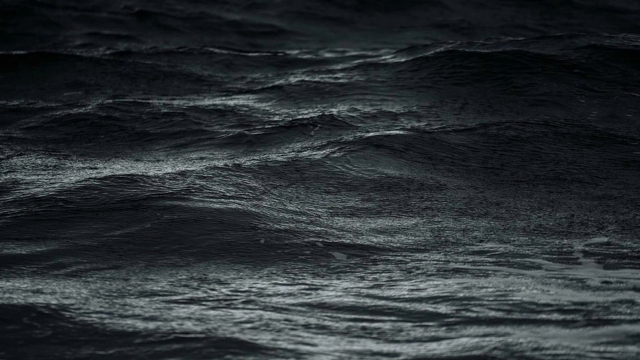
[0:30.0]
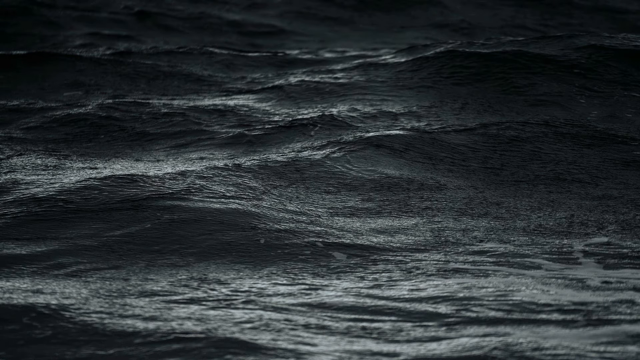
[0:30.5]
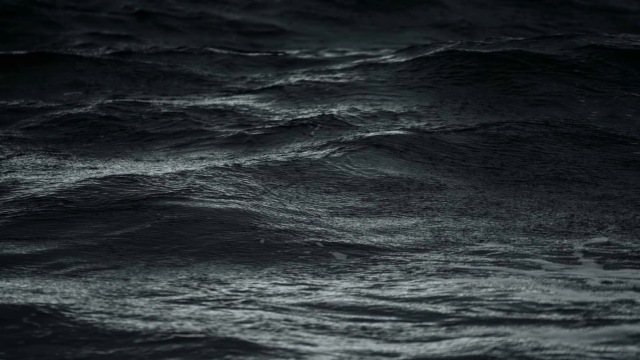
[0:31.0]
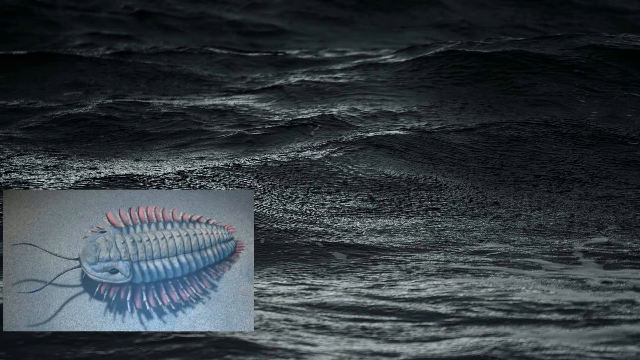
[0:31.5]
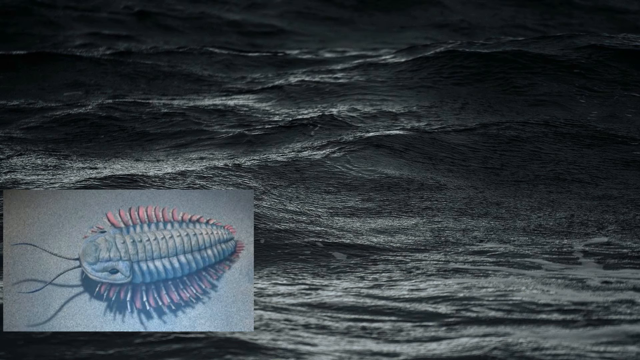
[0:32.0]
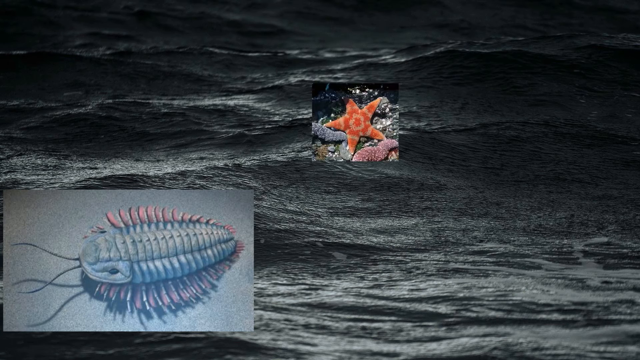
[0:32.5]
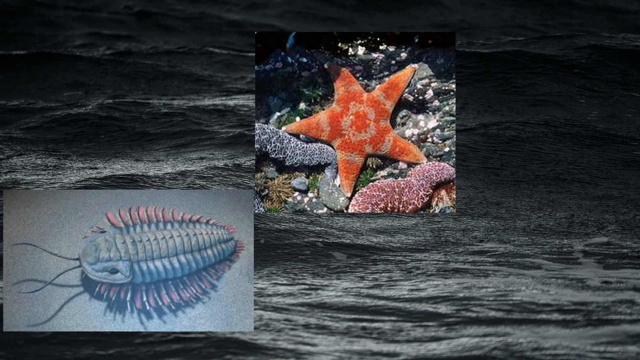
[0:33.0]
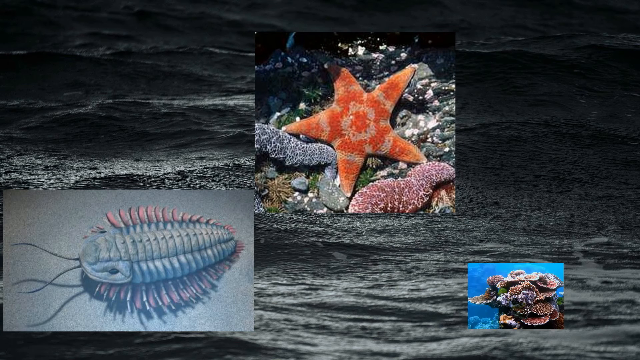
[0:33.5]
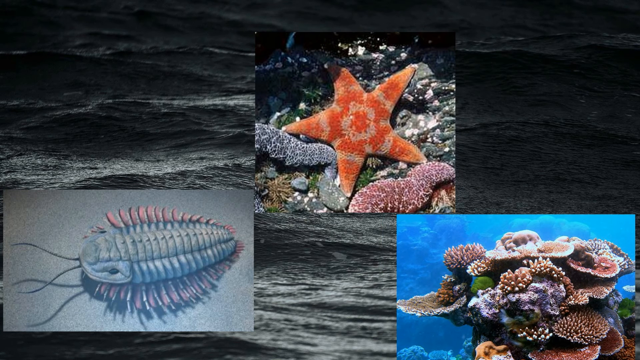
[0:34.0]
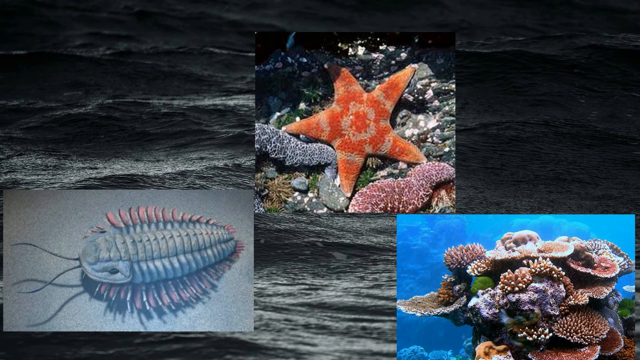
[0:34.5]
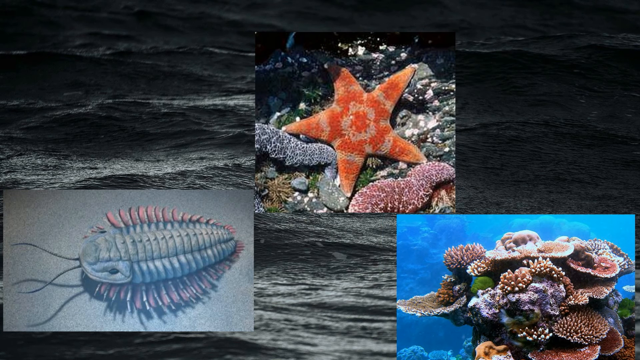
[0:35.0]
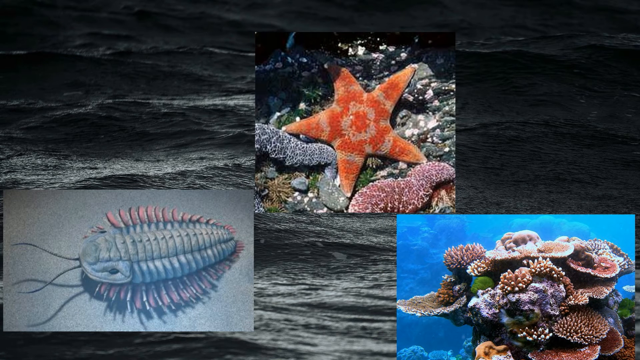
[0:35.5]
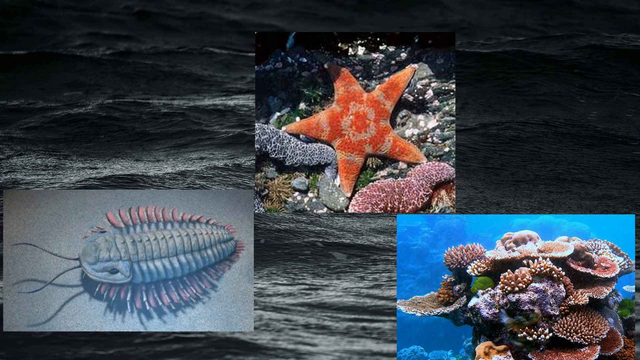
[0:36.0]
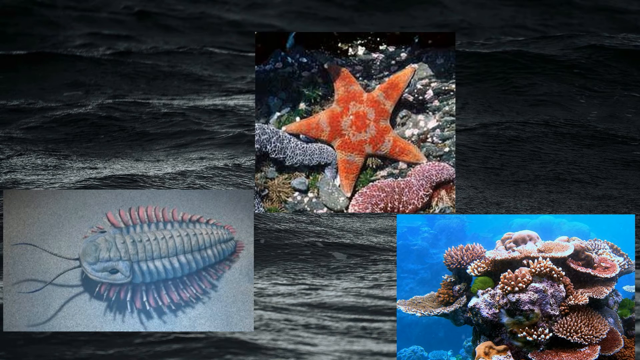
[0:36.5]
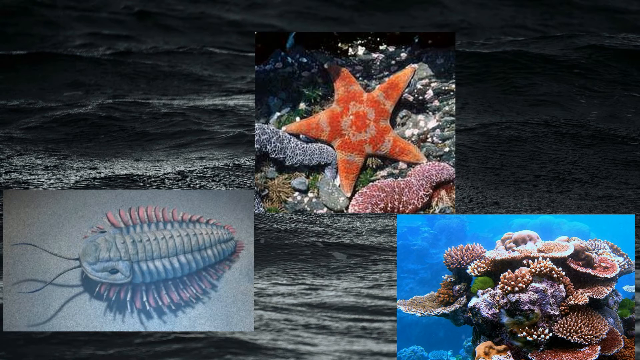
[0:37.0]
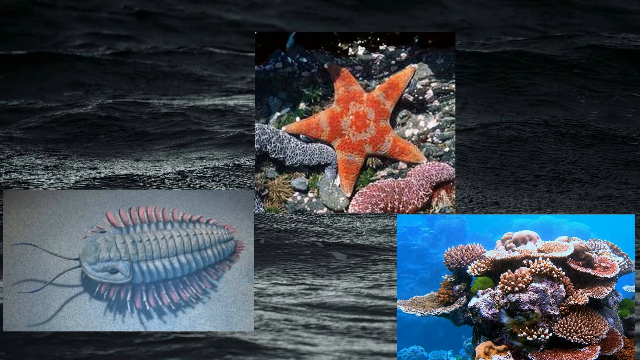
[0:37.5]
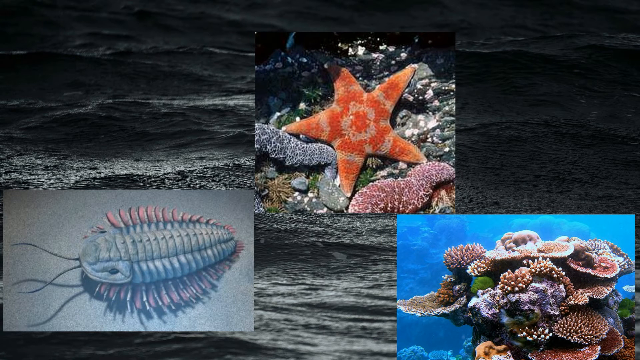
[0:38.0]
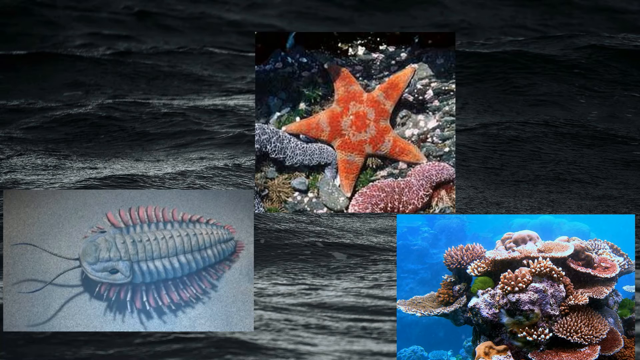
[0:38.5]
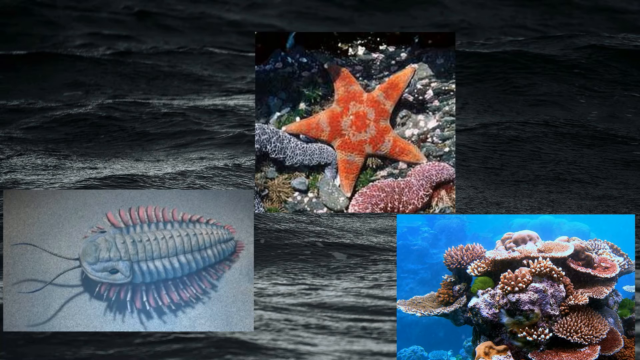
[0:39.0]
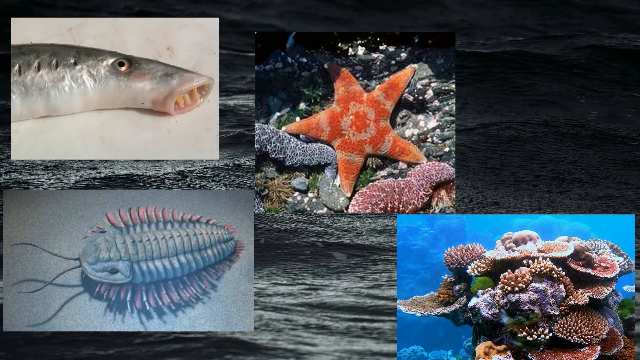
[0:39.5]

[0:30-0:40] A still picture of a lake at night serves as the background, and four separate pictures of different animals pop up on it. One fish pops up, then another fish with an open mouth. There is a starfish, something that looks like algae or a colorful mushroom, and a picture of what looks like a little millipede or centipede with many legs and two antennae.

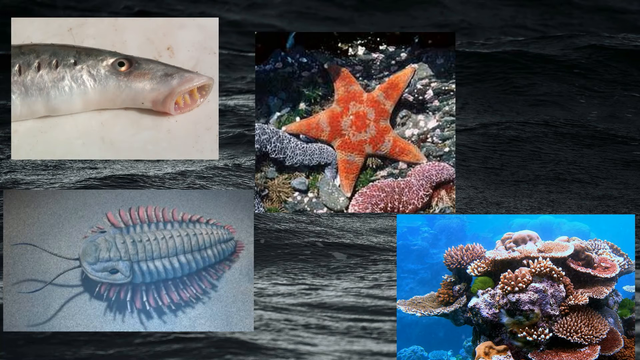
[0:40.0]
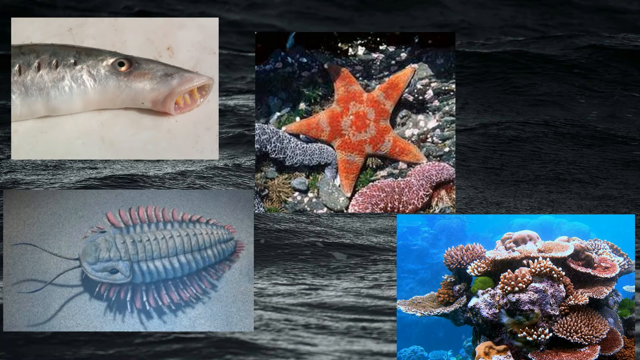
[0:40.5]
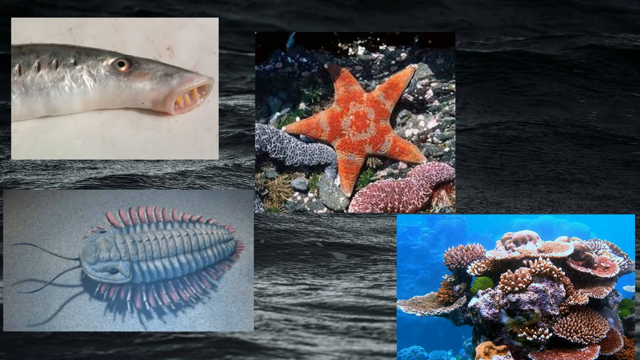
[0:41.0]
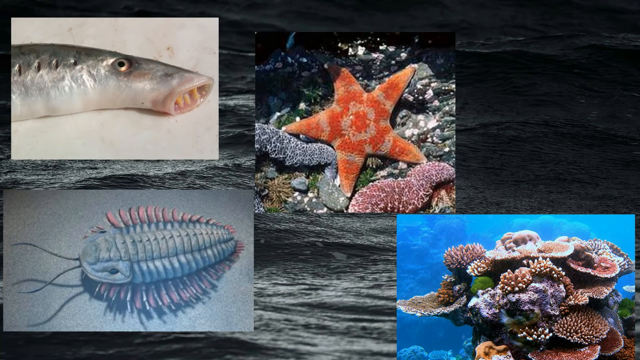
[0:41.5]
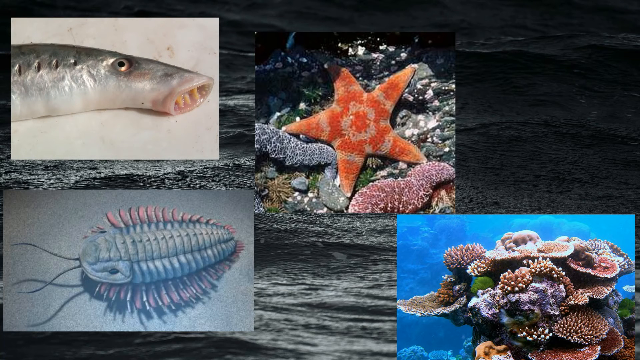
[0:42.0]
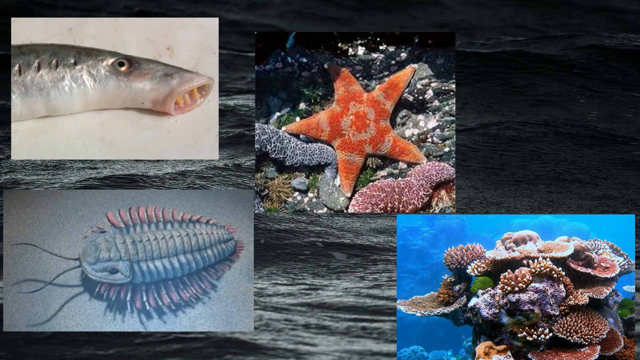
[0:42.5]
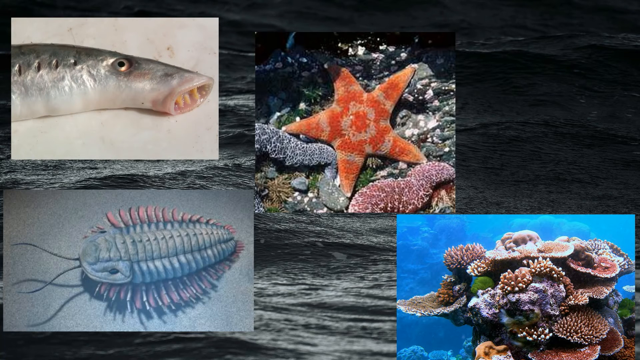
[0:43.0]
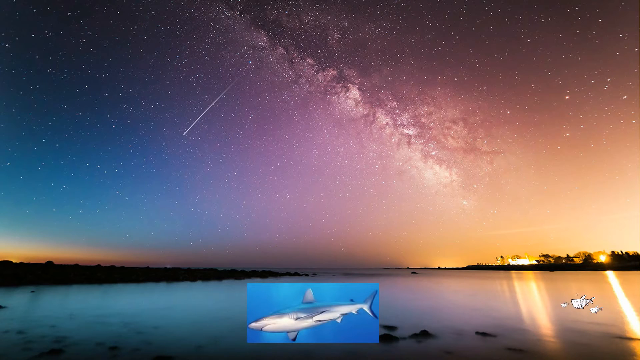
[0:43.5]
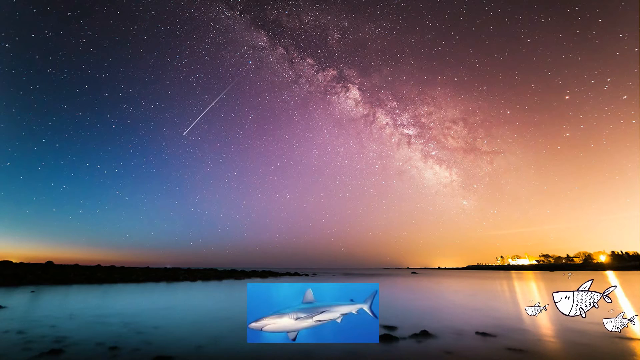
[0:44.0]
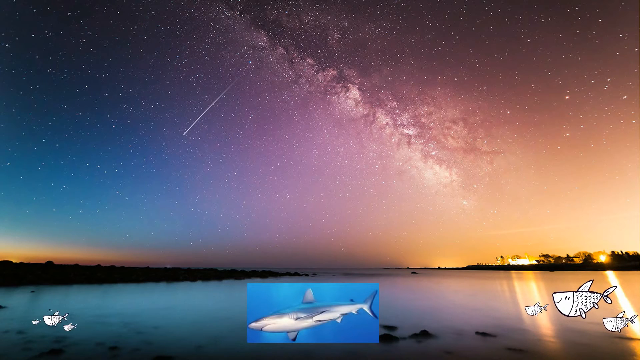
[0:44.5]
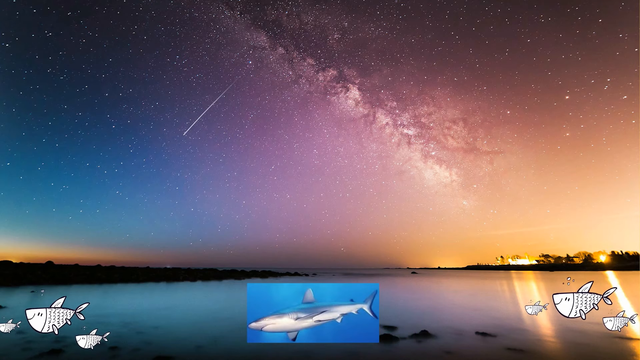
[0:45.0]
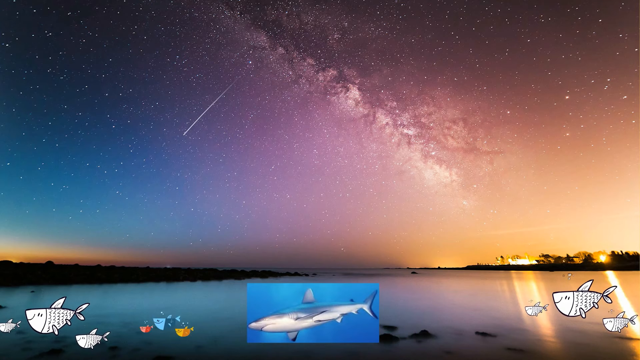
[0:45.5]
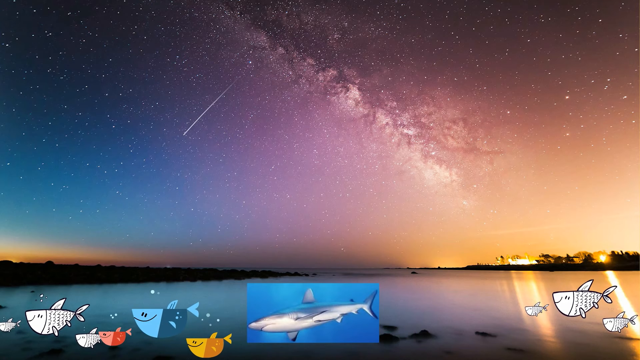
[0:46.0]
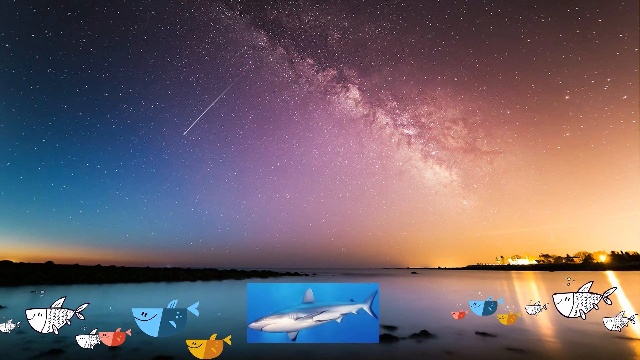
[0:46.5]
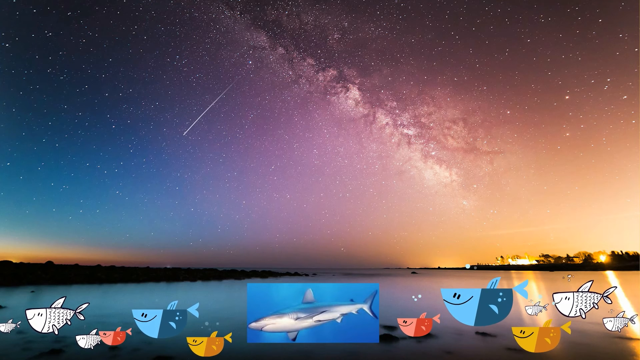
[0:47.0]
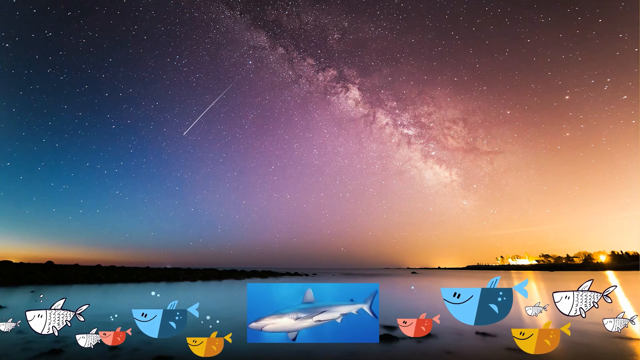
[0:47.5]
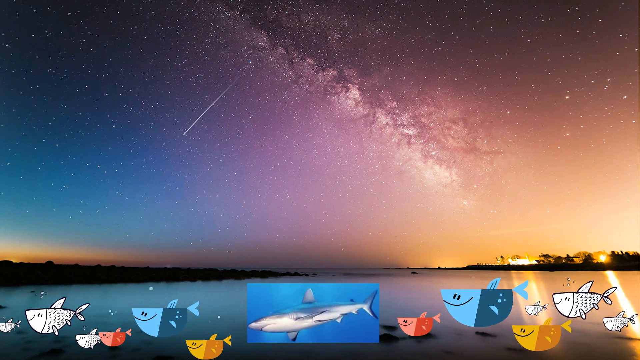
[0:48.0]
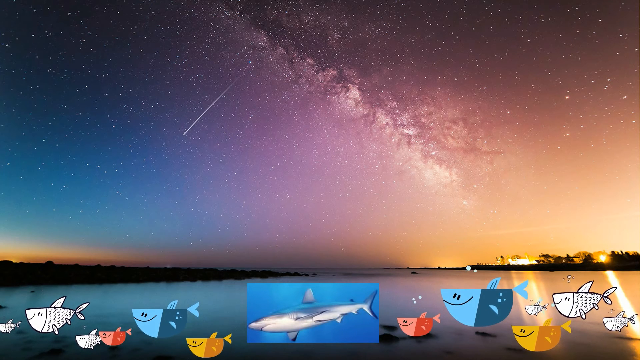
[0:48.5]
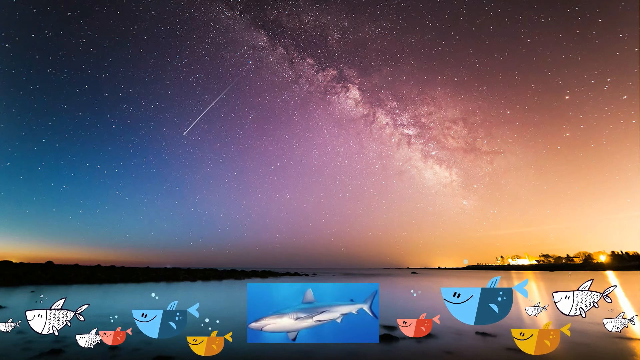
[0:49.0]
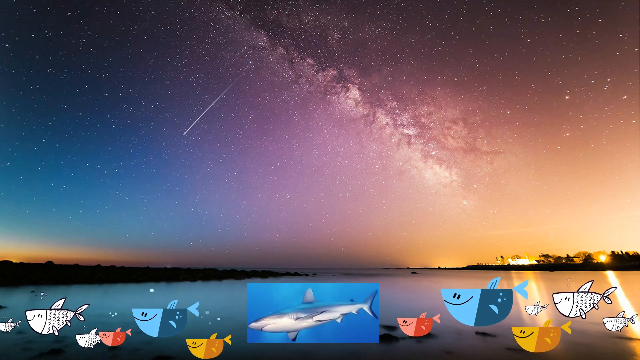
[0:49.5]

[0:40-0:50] Among the pictures is a fish with about three teeth in its mouth, a starfish surrounded by a silver creature and a pink creature, mushroom-like pictures, and one that looks like a little frog. The four pictures of creatures are displayed on top of a still background picture of the seaside at night: fish beneath the sea level, a sky that is partly purple, a sunset at the far end of the sea, dark night on the water, and what look like stars in the sky.